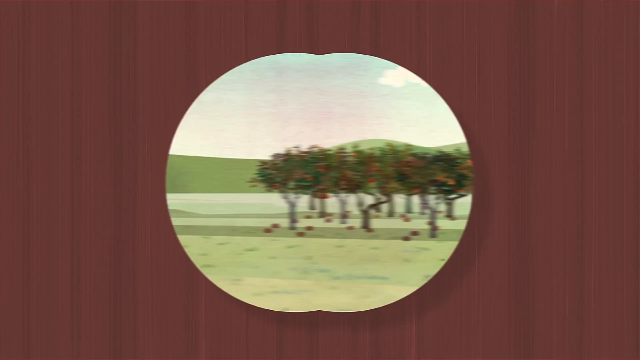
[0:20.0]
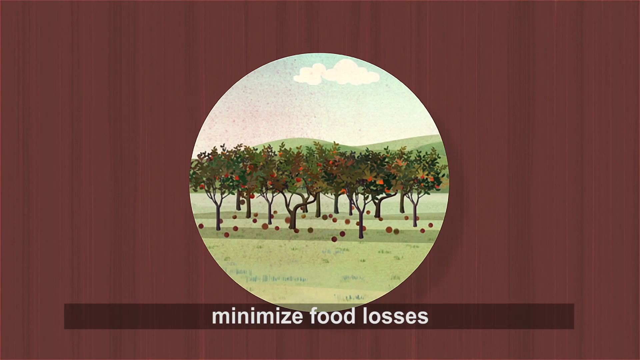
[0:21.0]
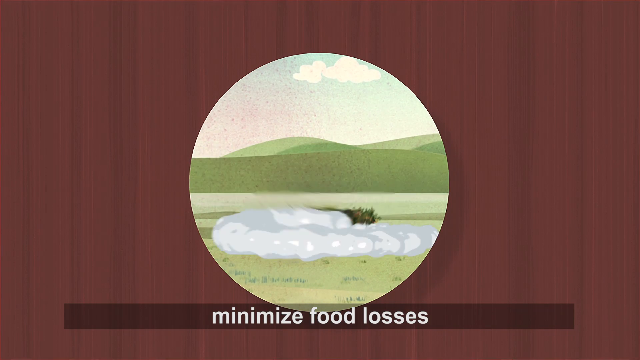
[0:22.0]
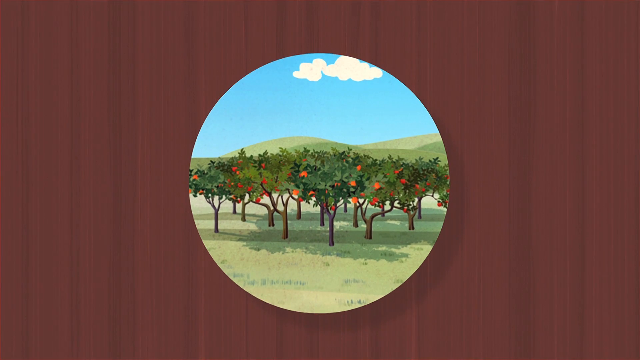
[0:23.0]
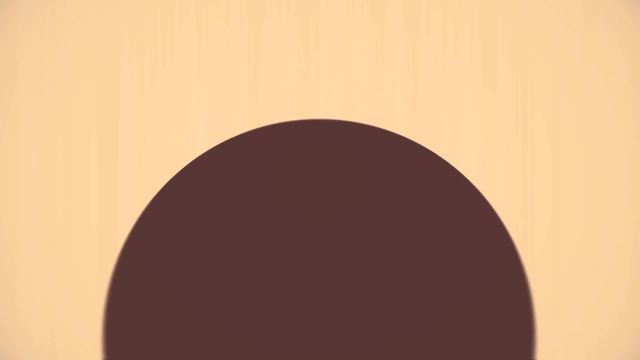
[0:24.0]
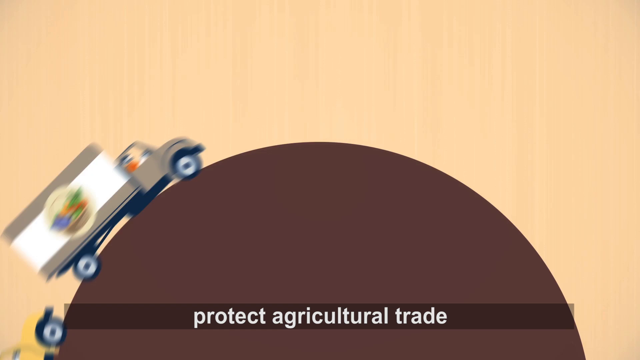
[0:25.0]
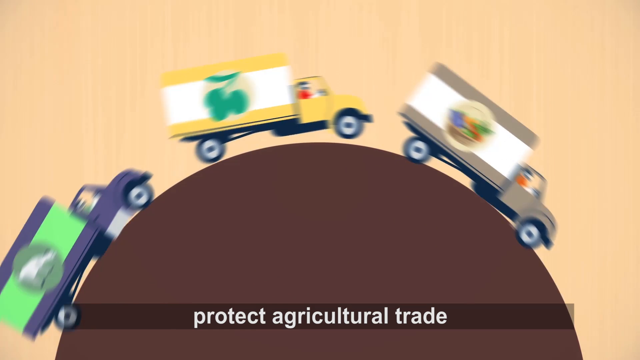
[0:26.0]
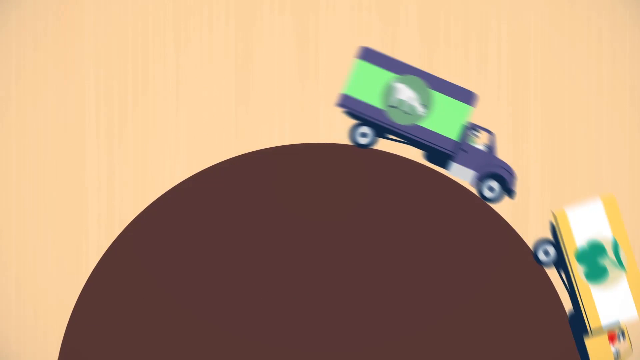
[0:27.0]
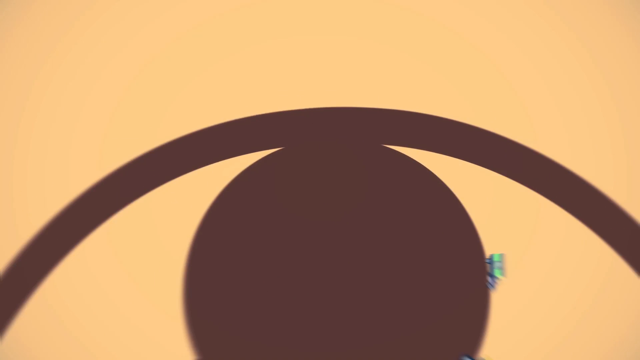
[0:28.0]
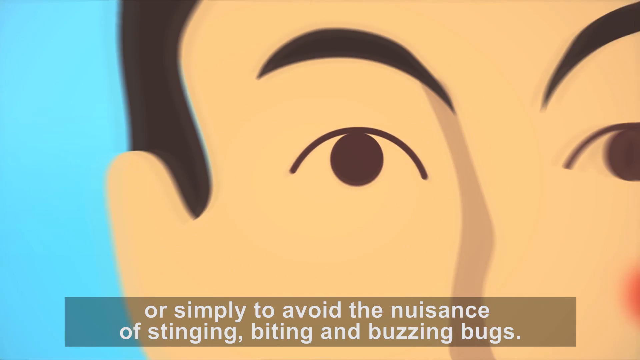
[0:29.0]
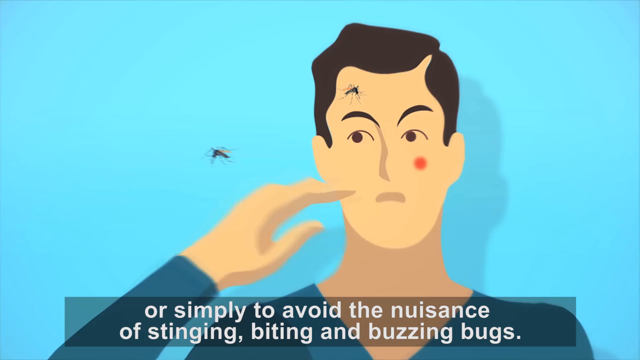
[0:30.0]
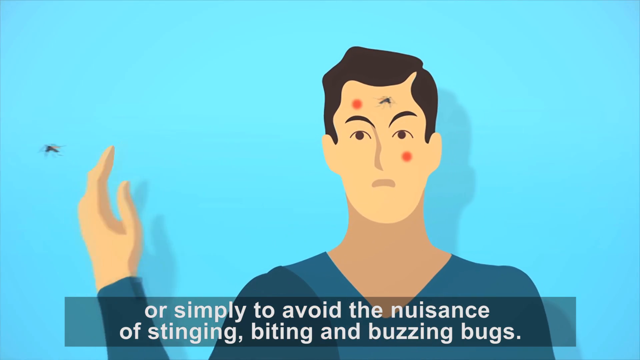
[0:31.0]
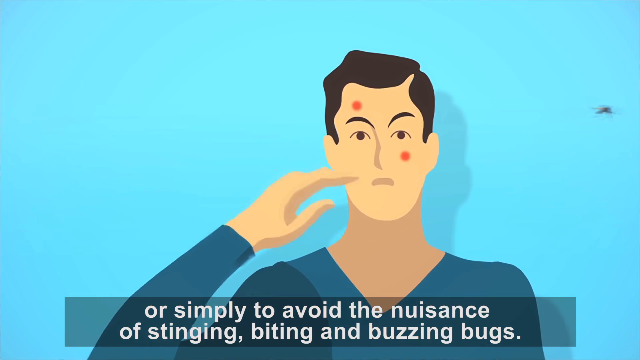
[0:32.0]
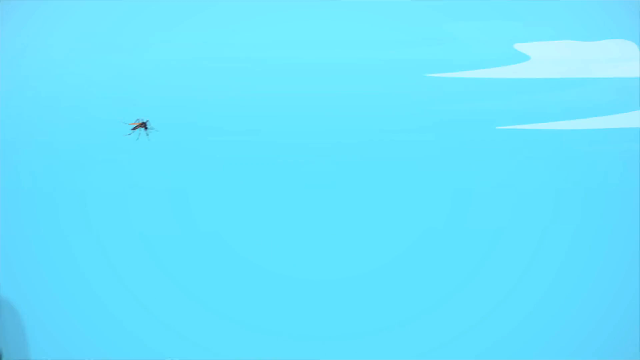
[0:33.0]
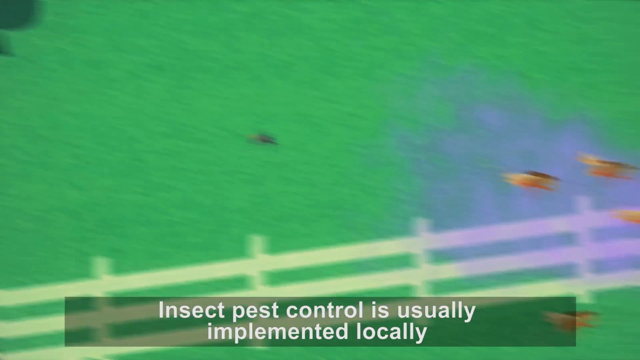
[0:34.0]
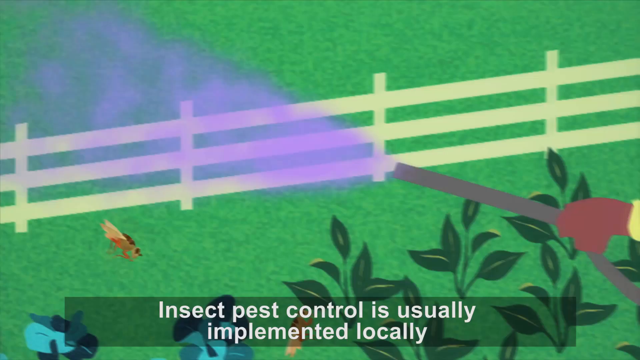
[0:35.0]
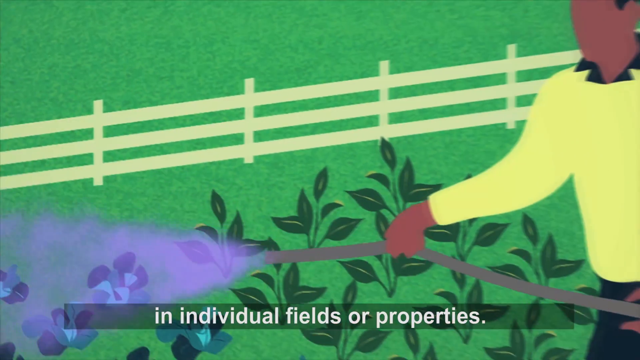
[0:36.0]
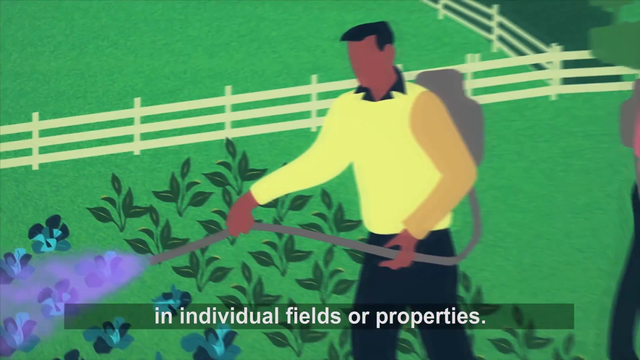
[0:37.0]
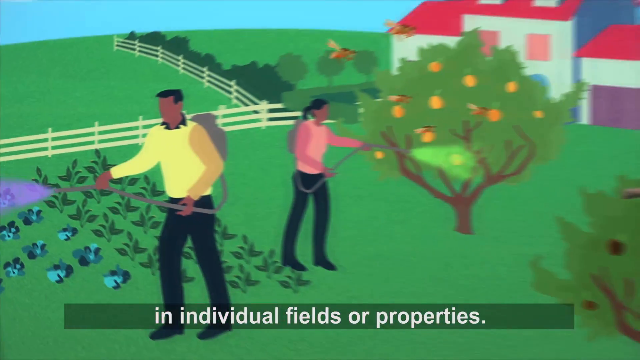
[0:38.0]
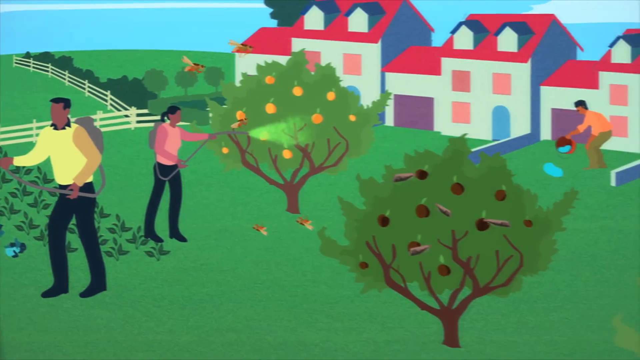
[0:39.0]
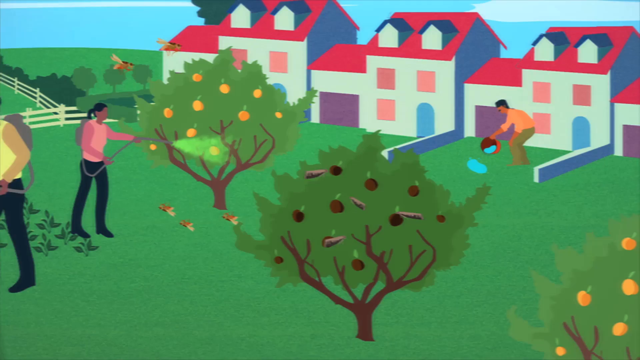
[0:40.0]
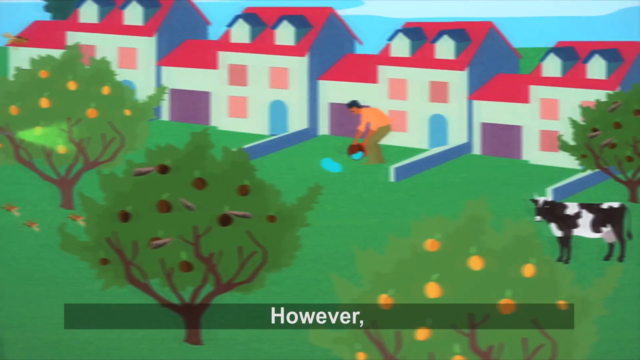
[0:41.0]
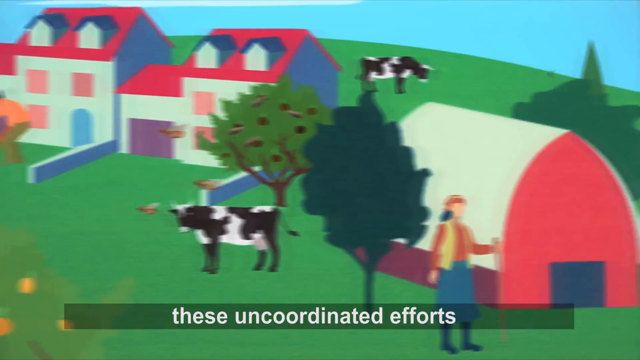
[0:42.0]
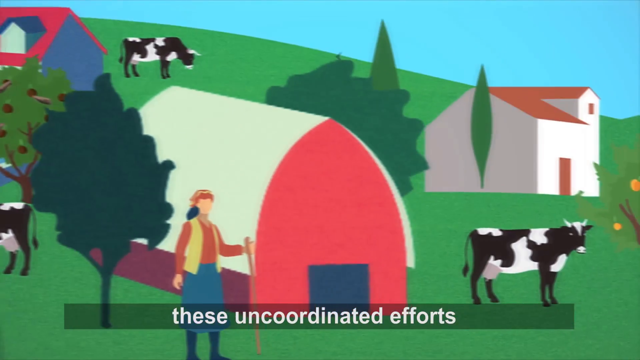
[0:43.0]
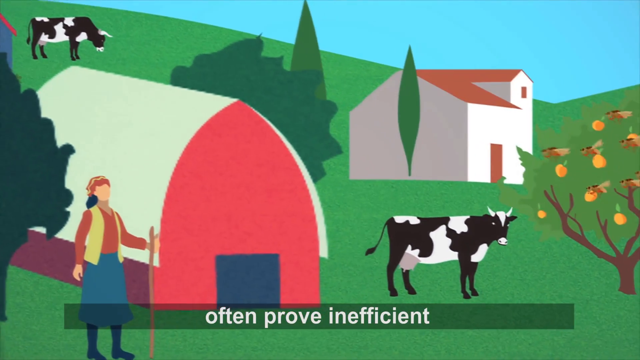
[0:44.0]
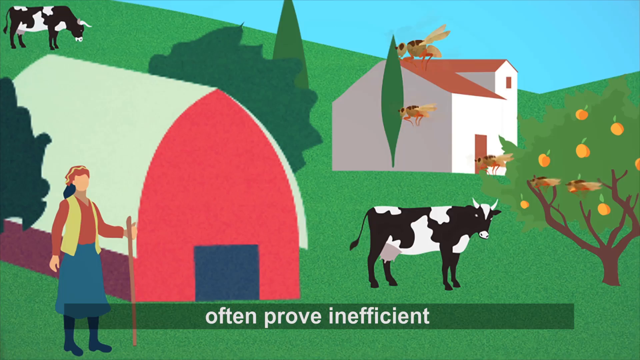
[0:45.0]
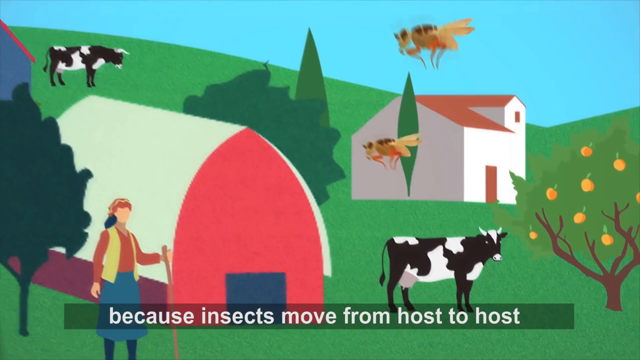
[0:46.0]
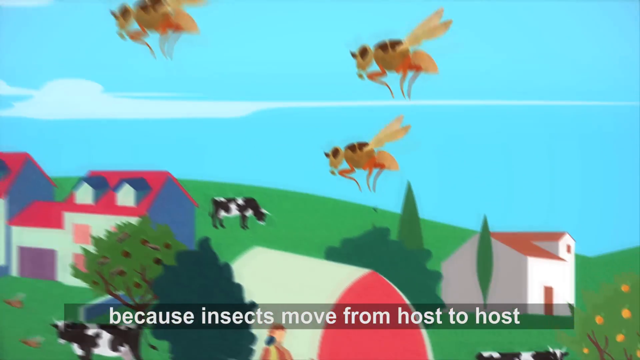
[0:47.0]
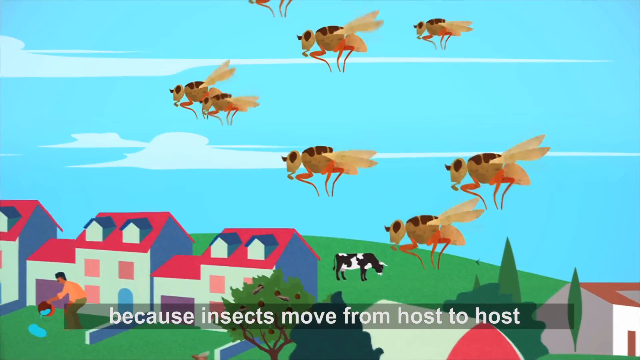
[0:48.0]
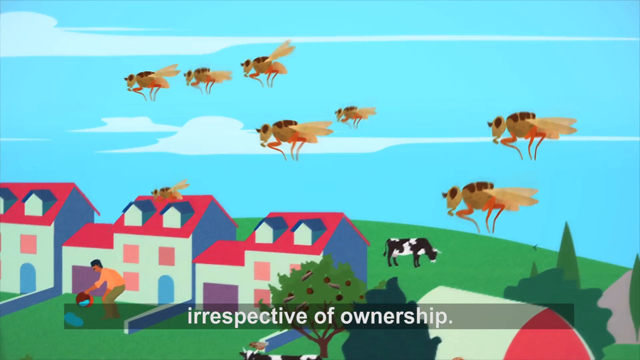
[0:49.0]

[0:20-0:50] The landscape scene continues with what looks like an orchard, with what look like apples fallen from a tree. This evolves into a series of trucks driving over a semicircle, which could represent the world or a hill; the trucks seem to be transporting foodstuffs. The hill evolves into a man's right eye. The man appears to have been bitten by mosquitoes on the right side of his forehead and his left cheek, shown by red blemishes, and he is trying to swat them away. A mosquito flies across the countryside, past a tree, and directly into the stream of someone spraying an insect repellent. In a further scene a man in a yellow shirt sprays some sort of insect repellent, and a woman in a pink shirt sprays insect repellent over the apples or oranges on a tree. A man in his garden pours water. As the view pans further to the right, there is a cow on a farm with a barn with a big red front, and many more mosquitoes.